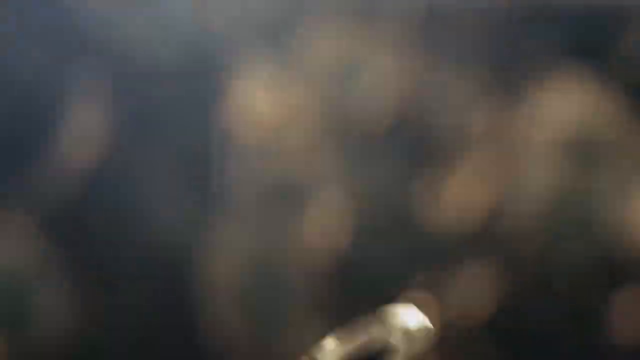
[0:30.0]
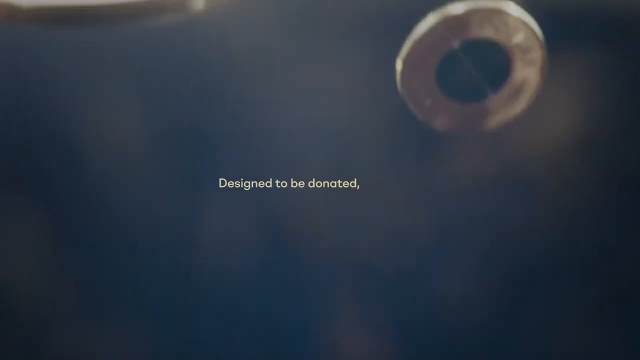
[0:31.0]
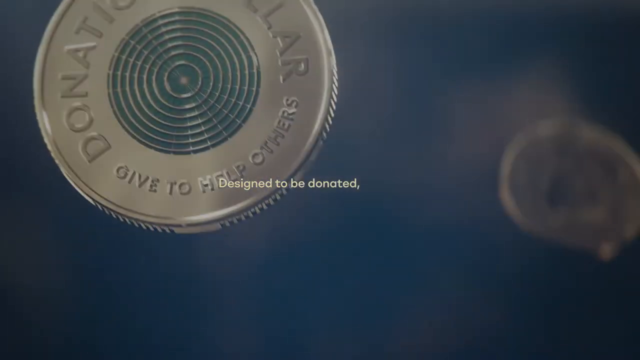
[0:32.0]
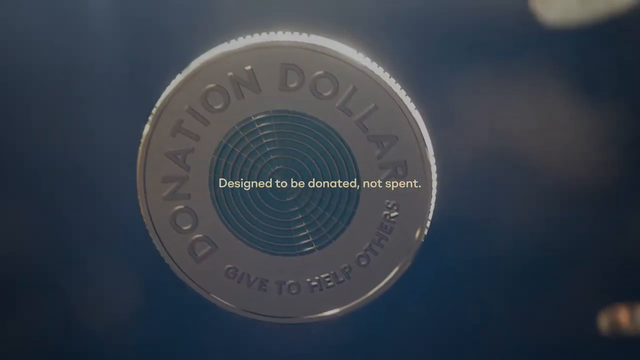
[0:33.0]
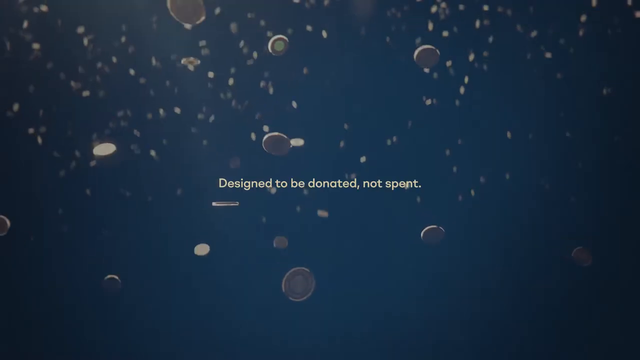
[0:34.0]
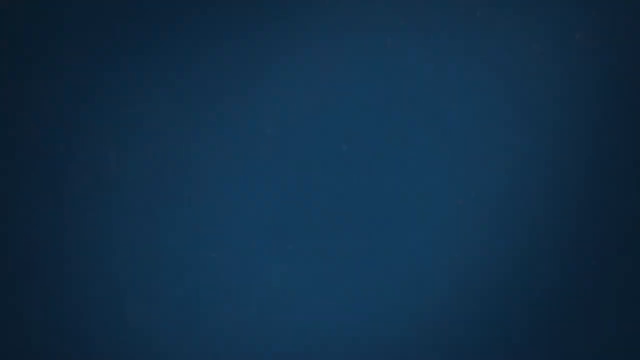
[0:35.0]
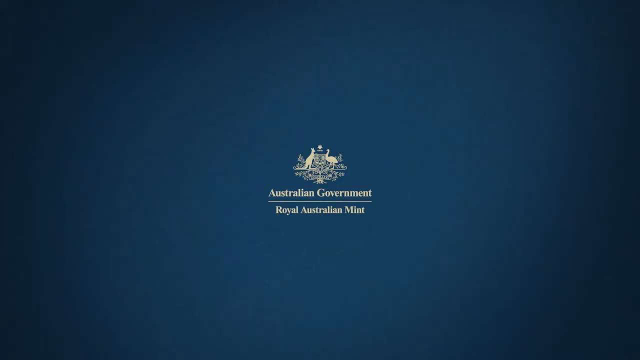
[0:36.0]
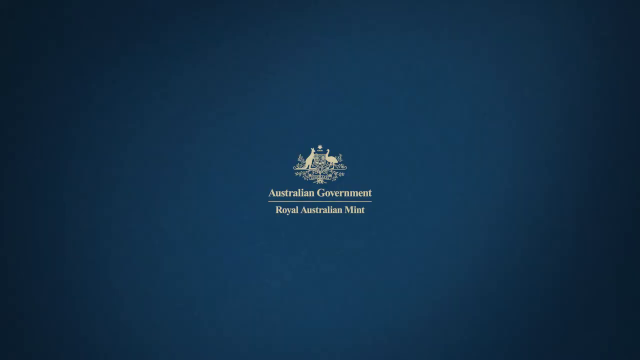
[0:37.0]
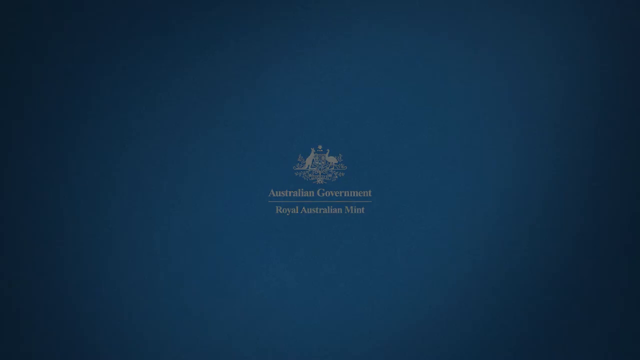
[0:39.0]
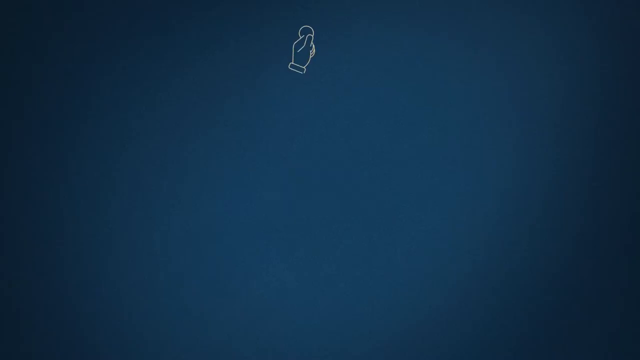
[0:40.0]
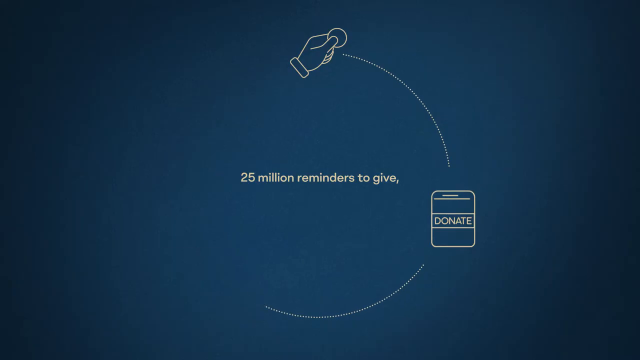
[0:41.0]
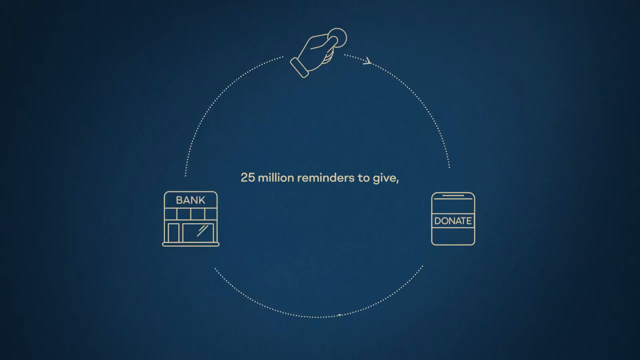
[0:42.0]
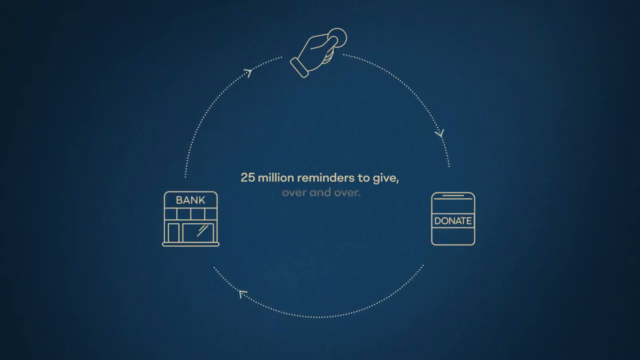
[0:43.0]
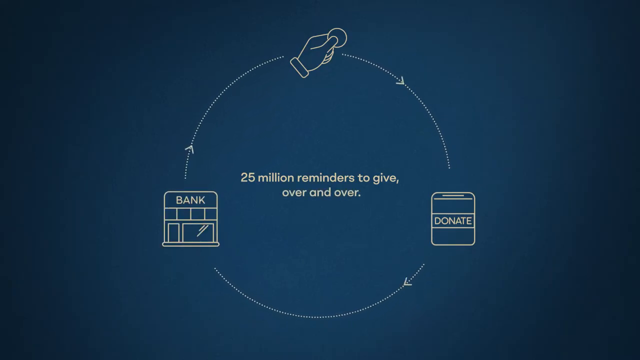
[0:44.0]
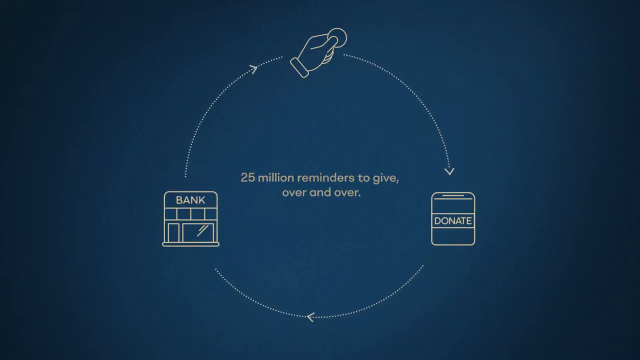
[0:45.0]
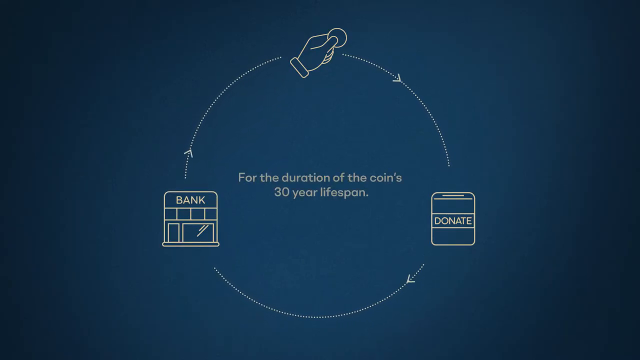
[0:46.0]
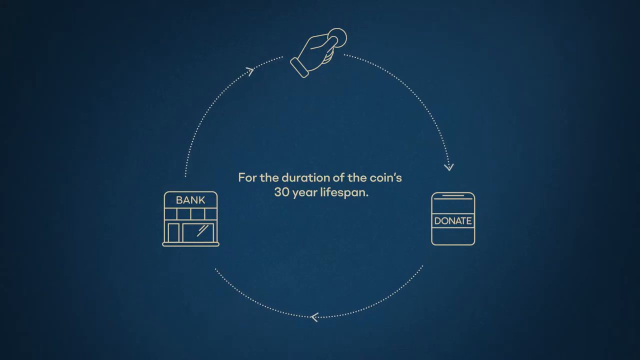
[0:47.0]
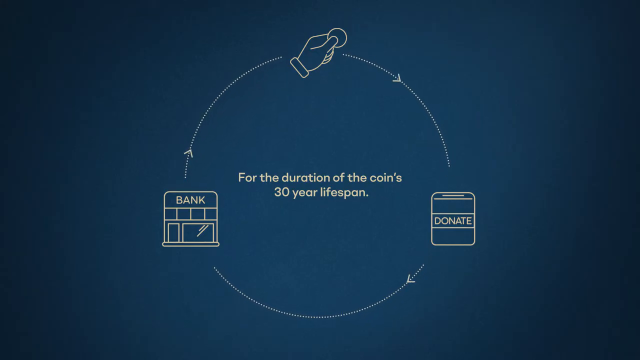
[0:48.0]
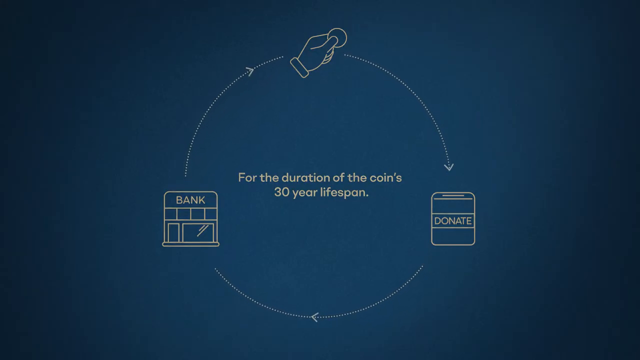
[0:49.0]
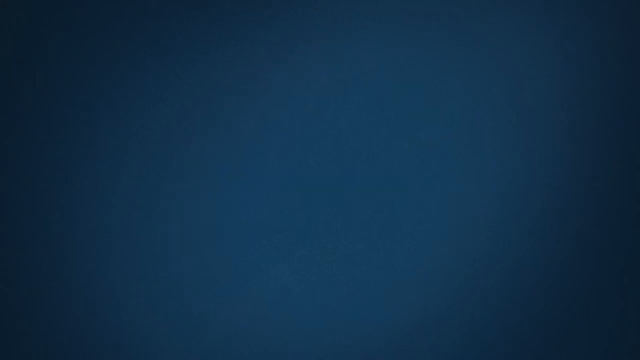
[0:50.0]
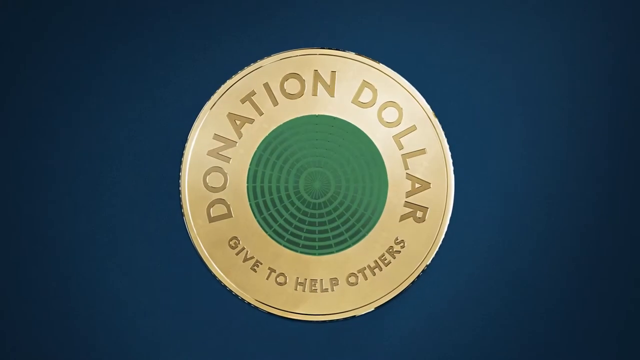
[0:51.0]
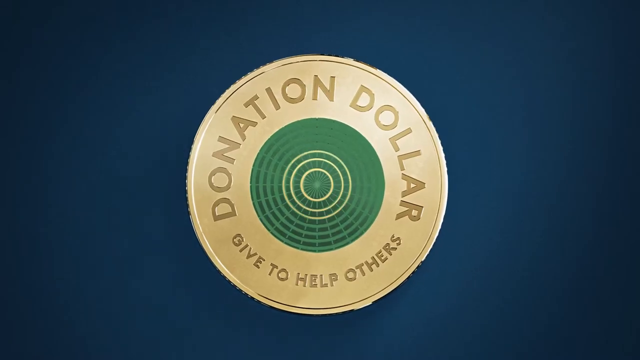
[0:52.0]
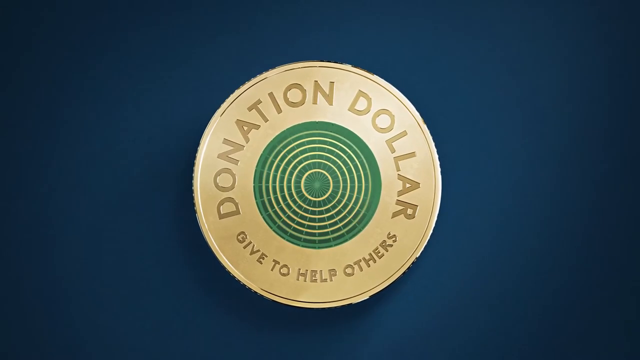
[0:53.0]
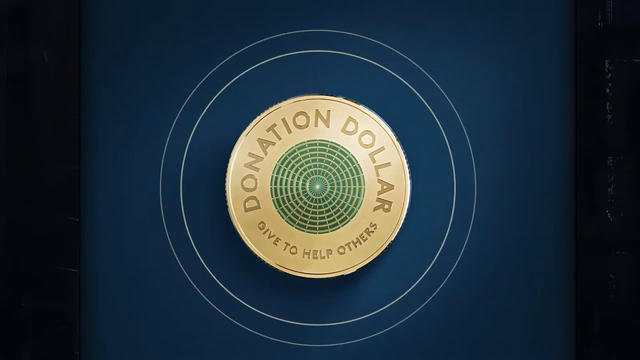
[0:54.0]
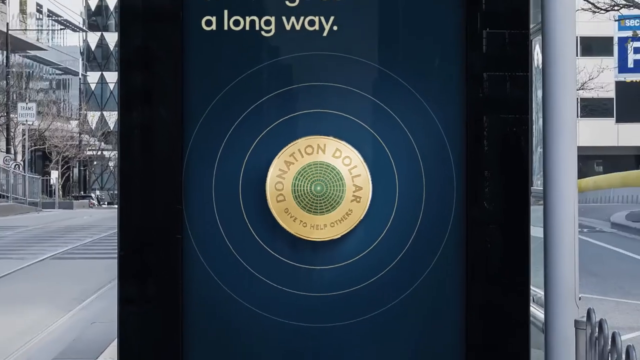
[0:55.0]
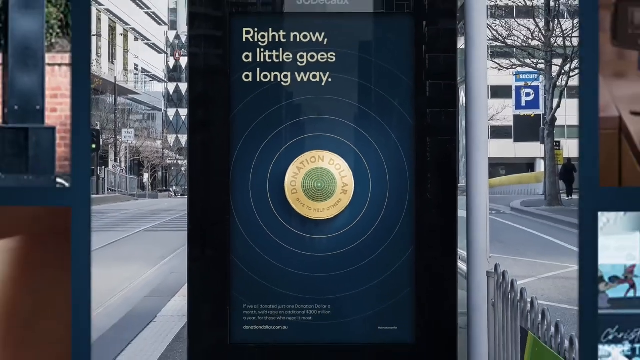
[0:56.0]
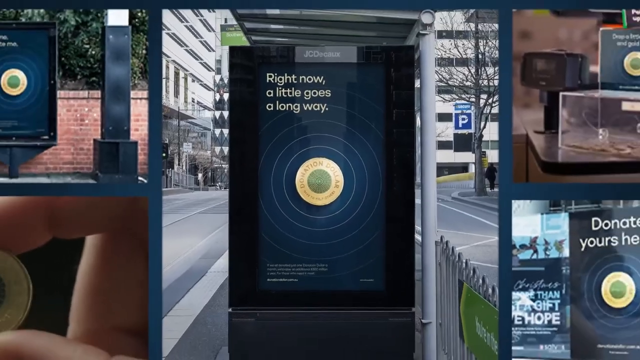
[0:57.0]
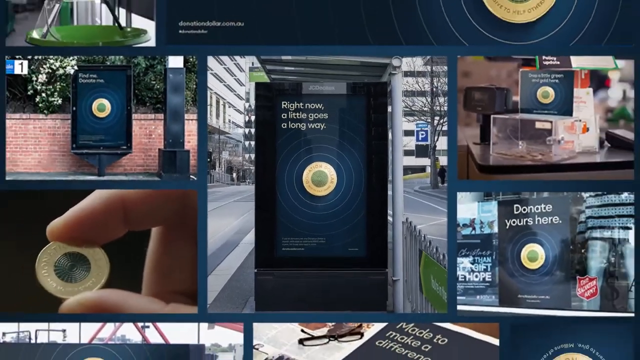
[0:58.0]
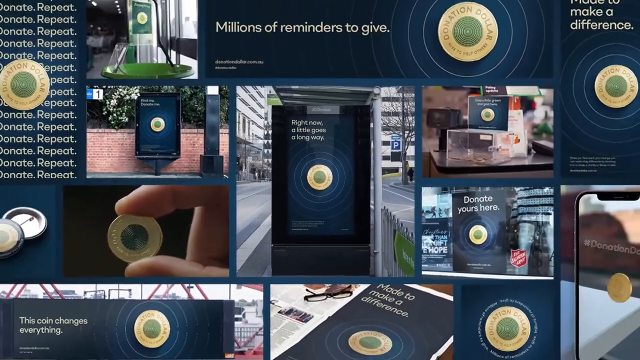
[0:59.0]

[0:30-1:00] As one of the coins flips, it reads "donation dollar." It is a gold coin with a silver part in the middle; it says "donation dollar" and below that "give to help others." Yellow text says "designed to be donated," and in the middle it says "Australian government," with some kind of symbol above that, followed by "Royal Australian mint." The screen is plain navy blue. The yellow letters fade away, and a simple motion graphic of what looks like a hand holding the coin appears with a little line, and below it a box that says "donate." Text in the middle says "25 million reminders to give," and an arrow points into "donate" and goes into a circle.